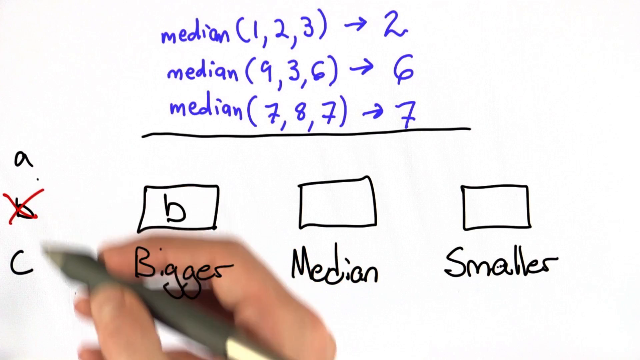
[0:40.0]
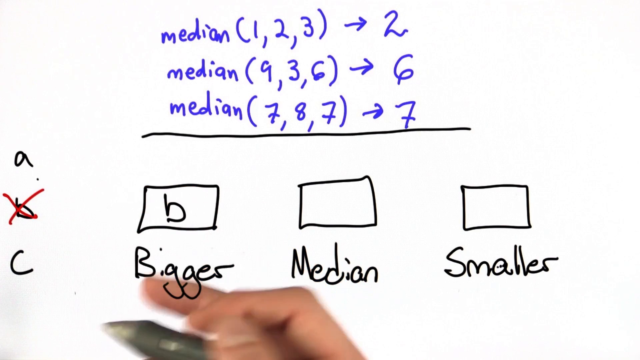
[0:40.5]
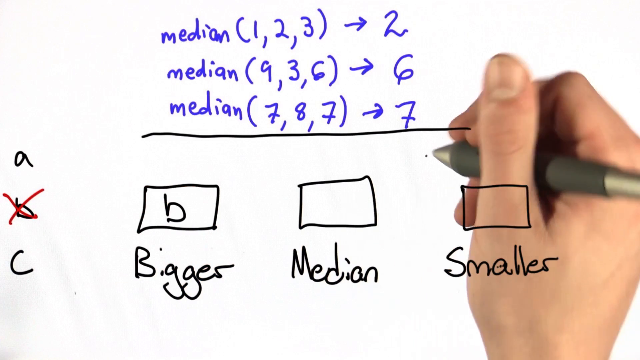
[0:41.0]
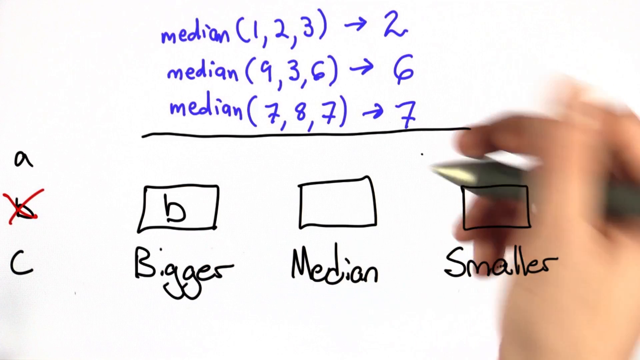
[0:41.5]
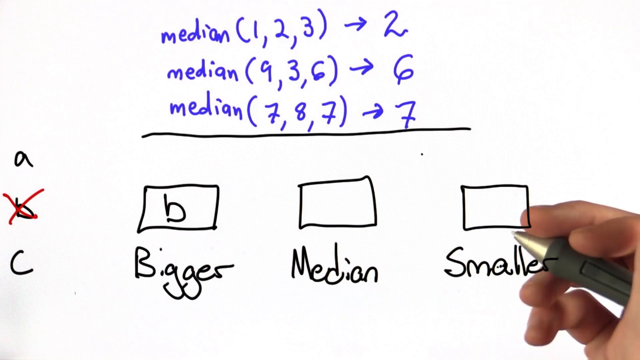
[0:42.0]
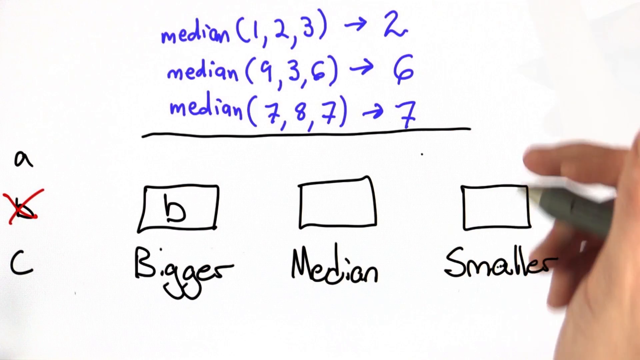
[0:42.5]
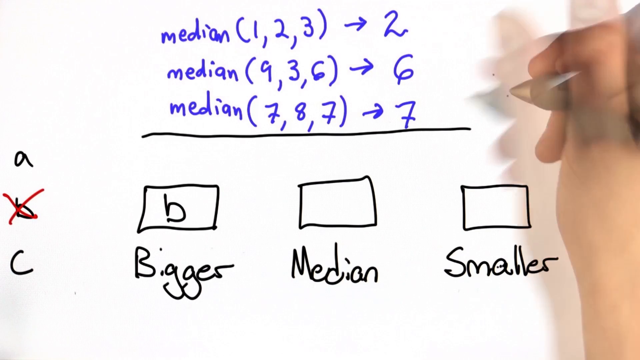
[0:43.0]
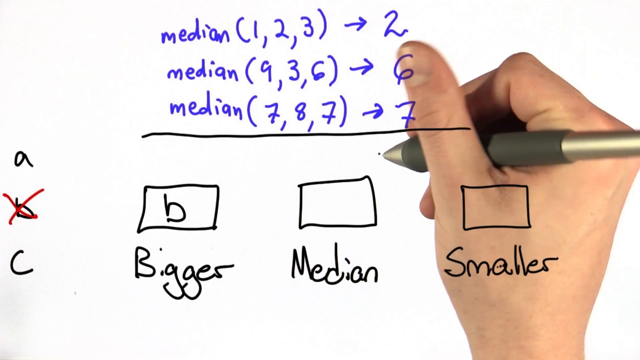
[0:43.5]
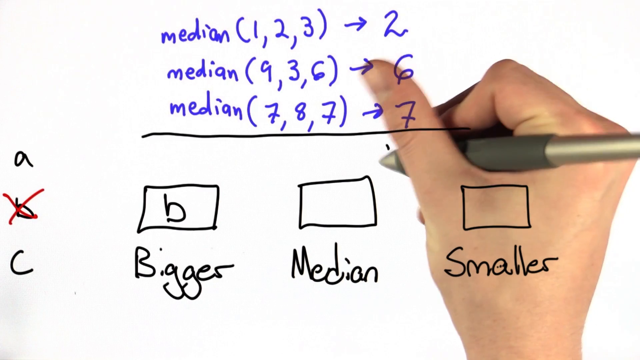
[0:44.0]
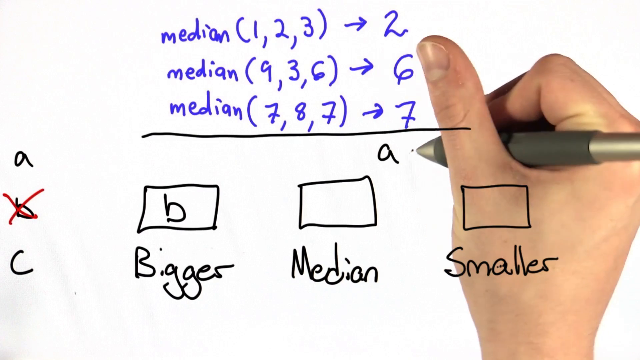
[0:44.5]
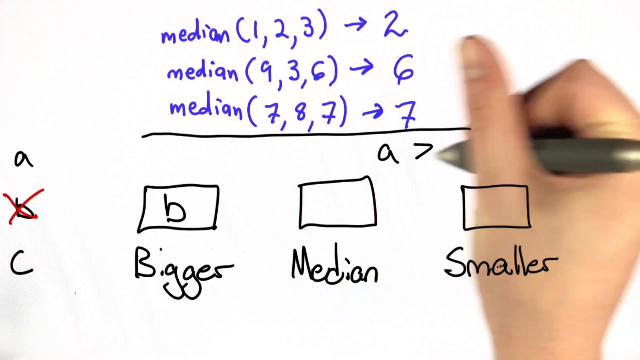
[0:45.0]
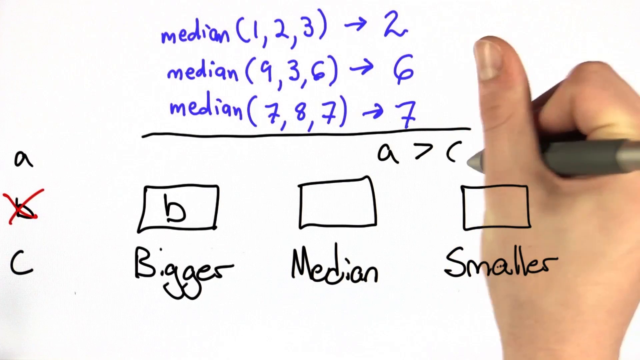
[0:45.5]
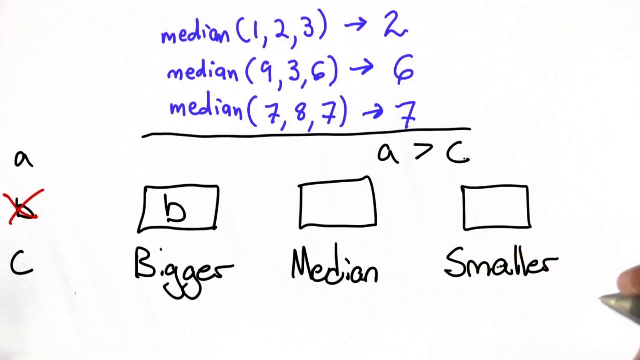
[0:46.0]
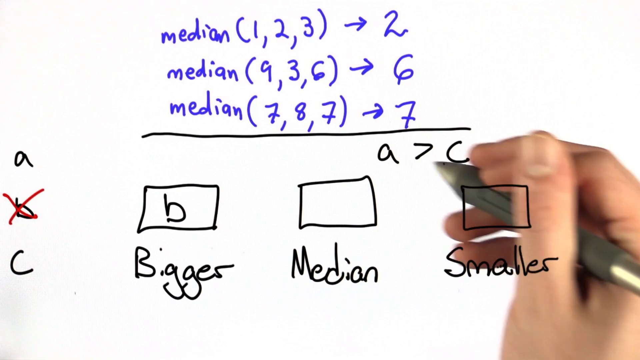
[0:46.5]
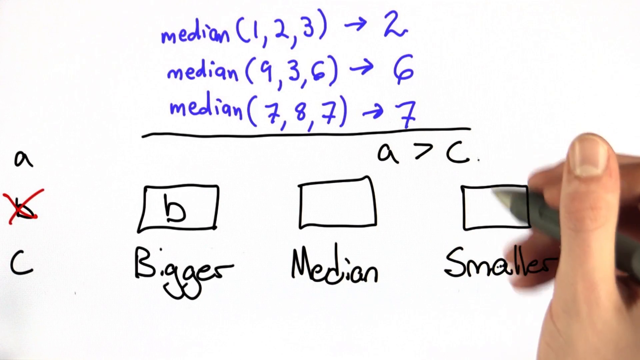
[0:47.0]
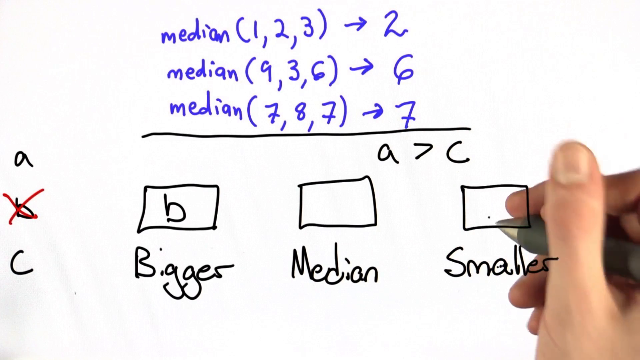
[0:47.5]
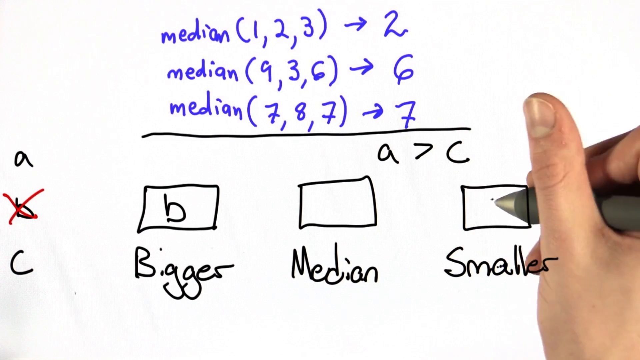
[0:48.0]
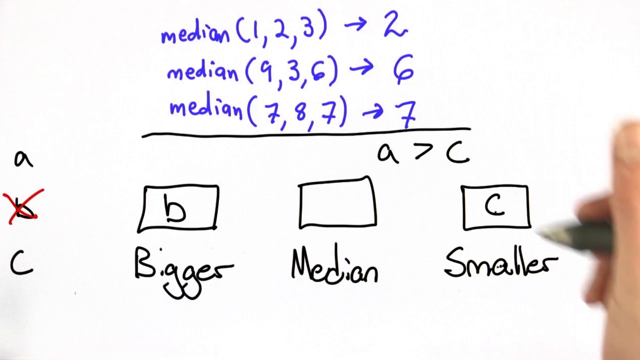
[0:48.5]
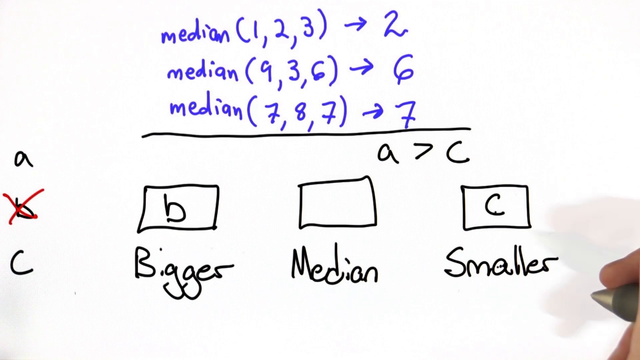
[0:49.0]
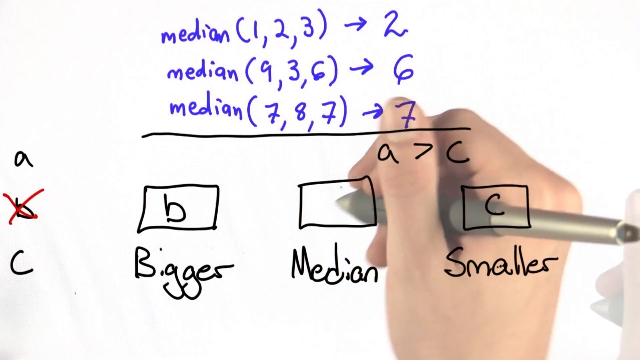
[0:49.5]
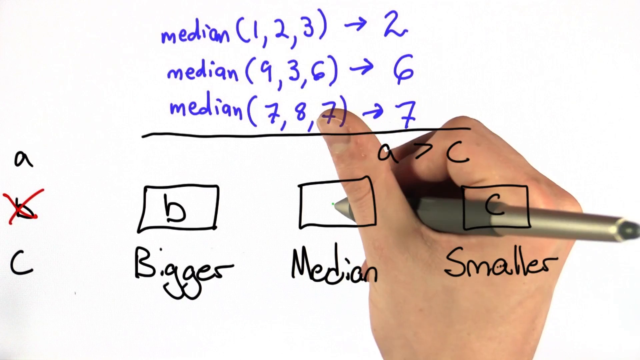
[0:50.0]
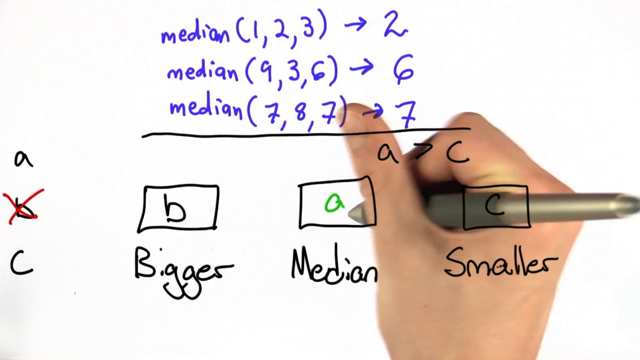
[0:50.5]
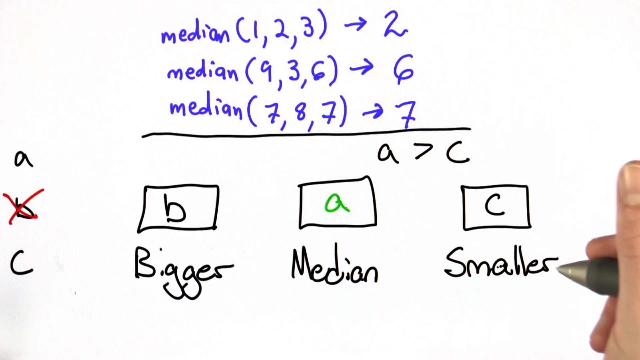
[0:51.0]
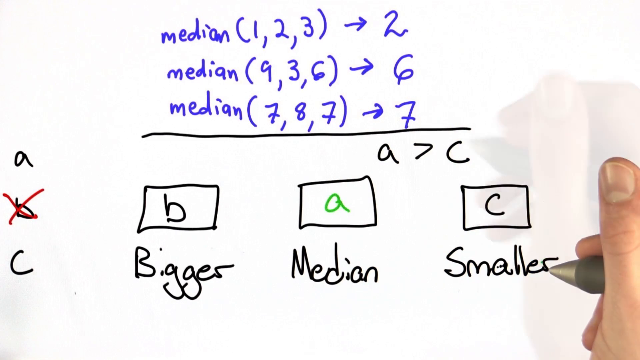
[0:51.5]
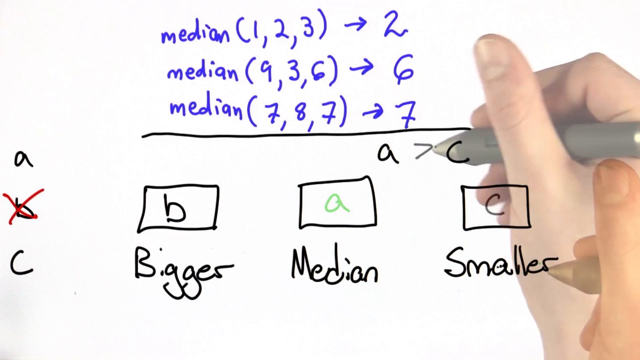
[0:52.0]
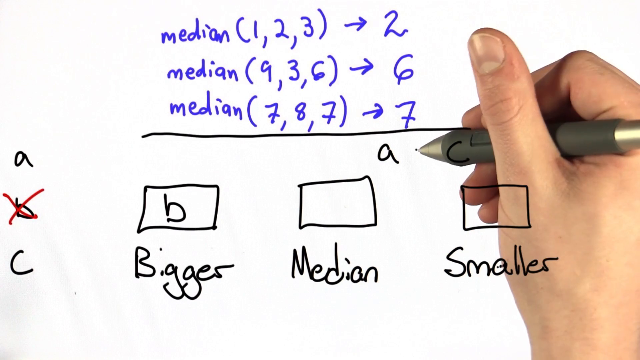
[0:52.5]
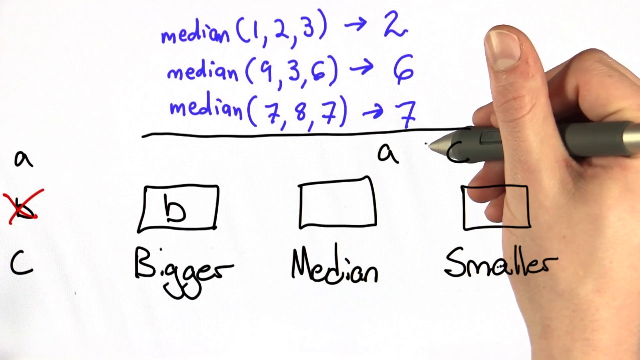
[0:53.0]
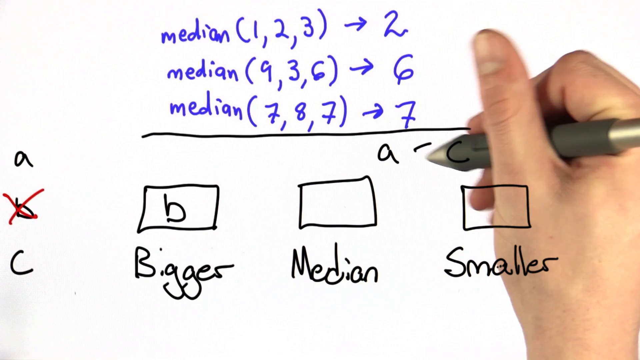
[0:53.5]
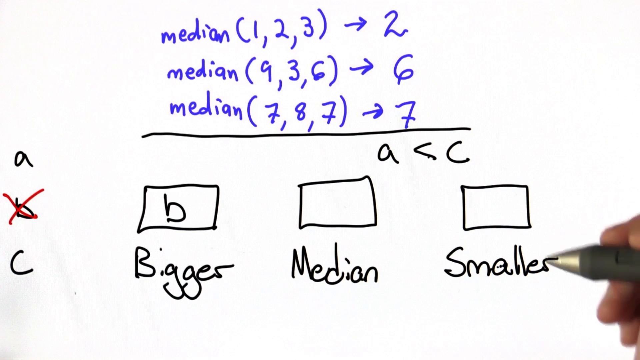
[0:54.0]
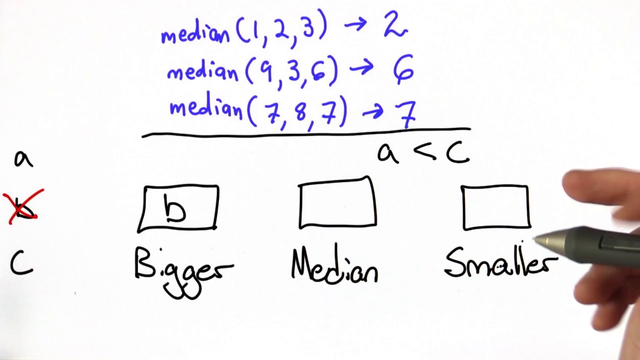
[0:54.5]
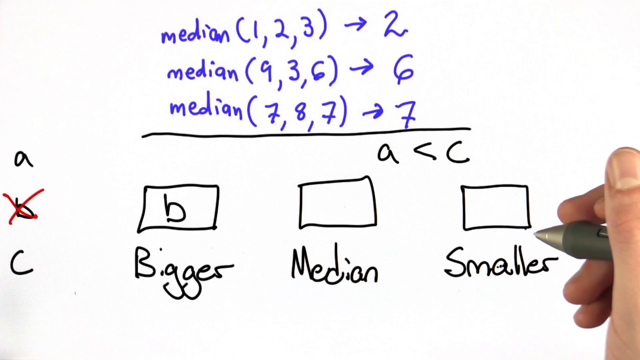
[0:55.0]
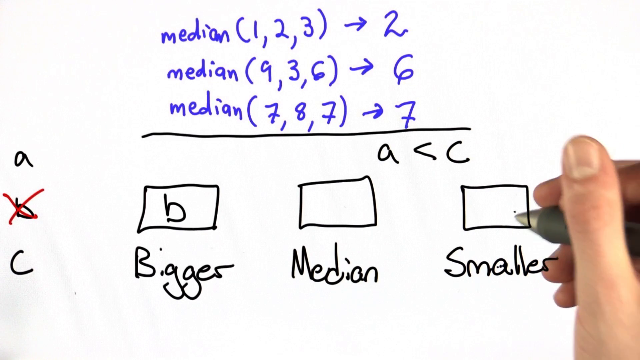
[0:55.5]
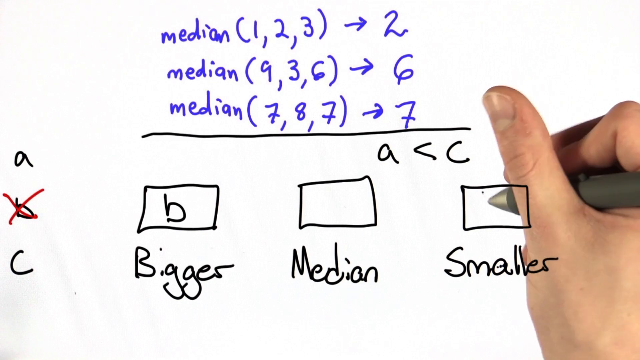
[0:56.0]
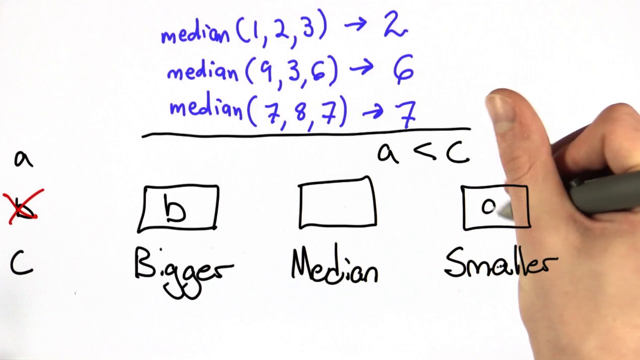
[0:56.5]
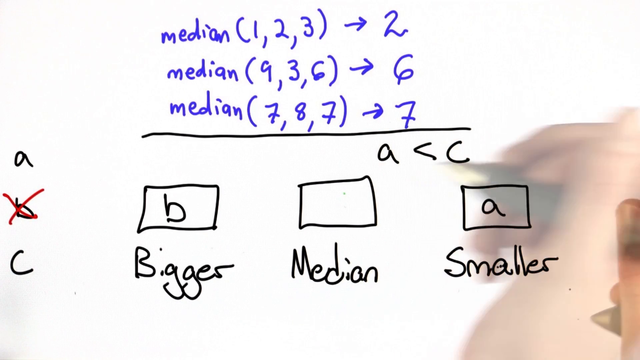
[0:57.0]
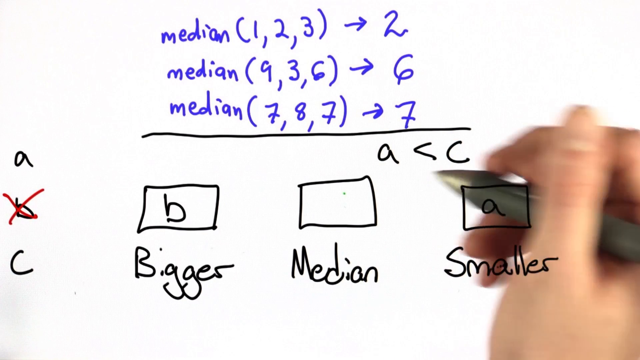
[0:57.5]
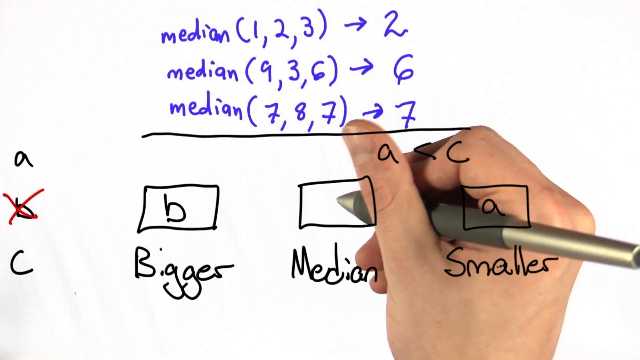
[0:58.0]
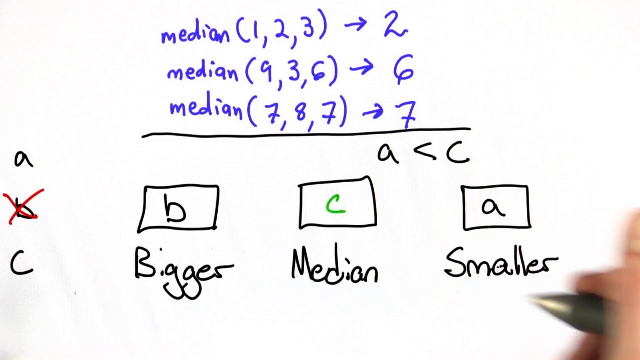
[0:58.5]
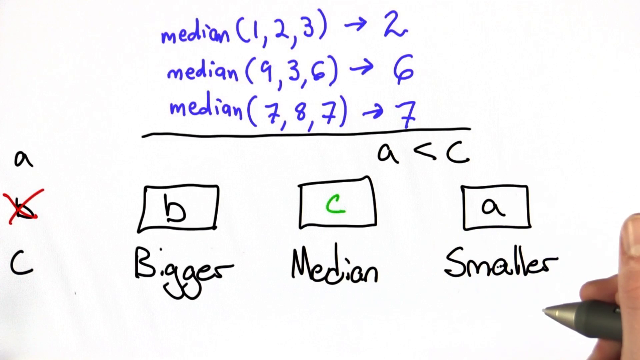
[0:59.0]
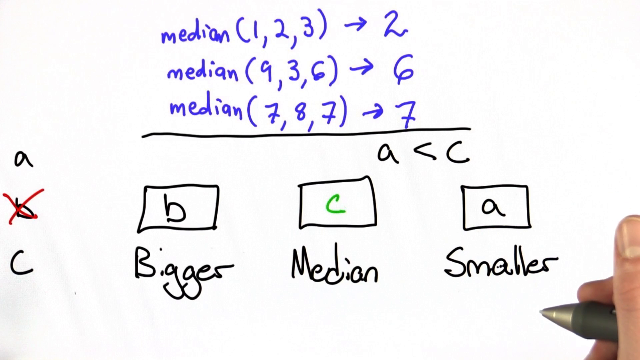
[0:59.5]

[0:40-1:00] The medians are still shown, along with the three options A, B and C. C is in "smaller" and A is in "bigger". "Median" is in green, while both "bigger" and "smaller" are in black.